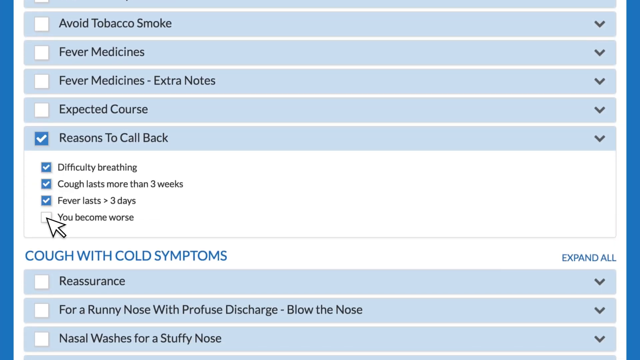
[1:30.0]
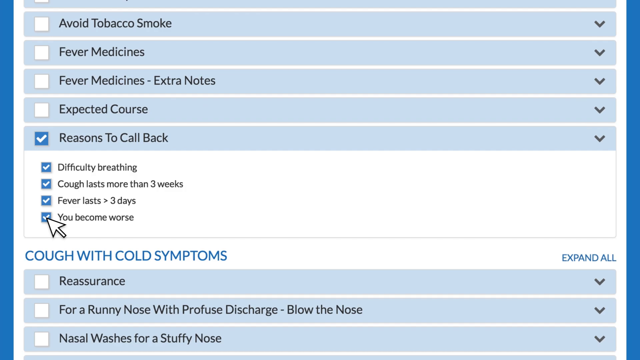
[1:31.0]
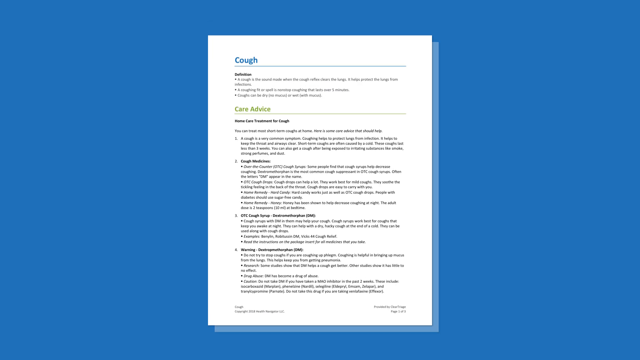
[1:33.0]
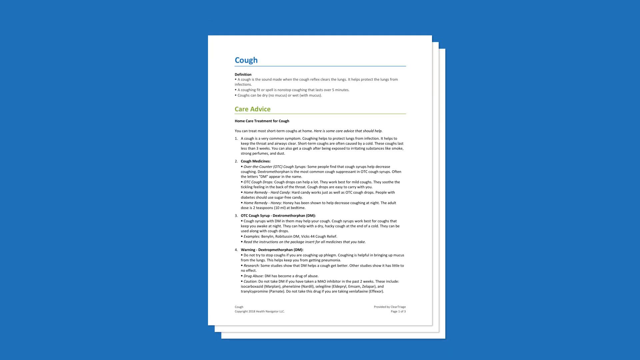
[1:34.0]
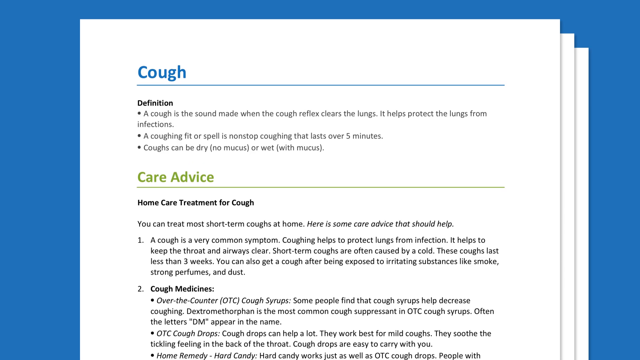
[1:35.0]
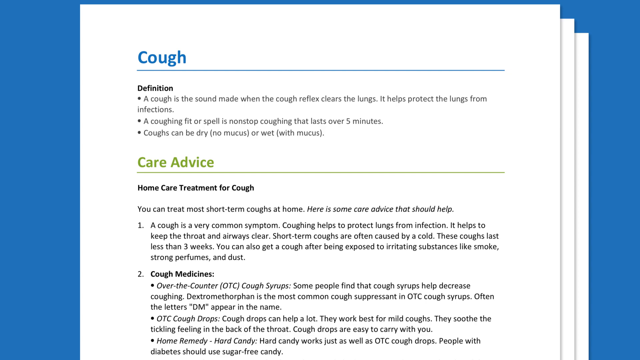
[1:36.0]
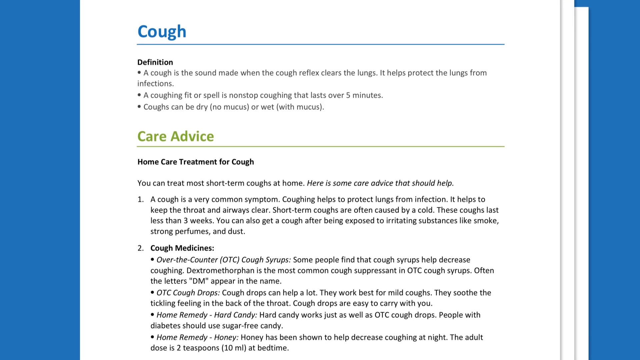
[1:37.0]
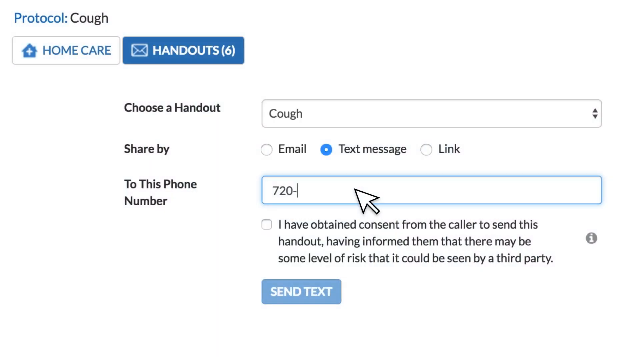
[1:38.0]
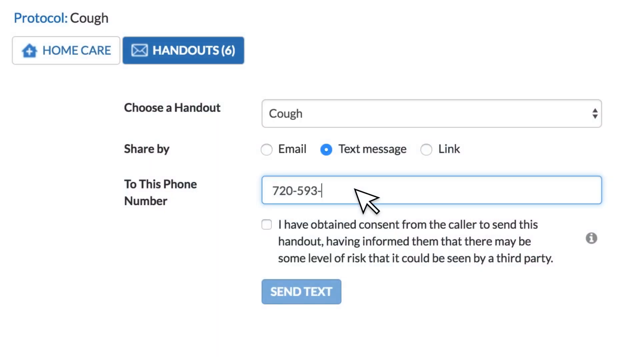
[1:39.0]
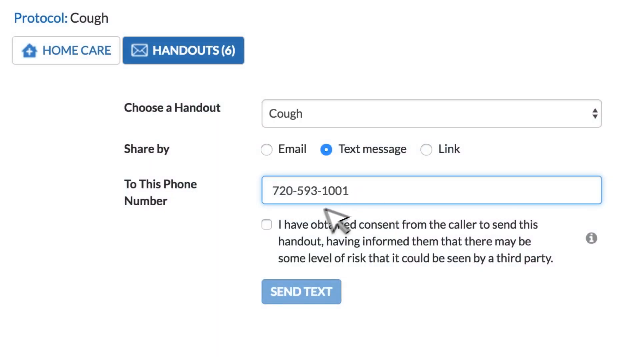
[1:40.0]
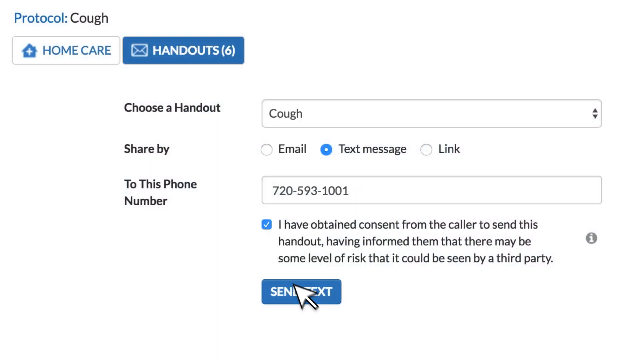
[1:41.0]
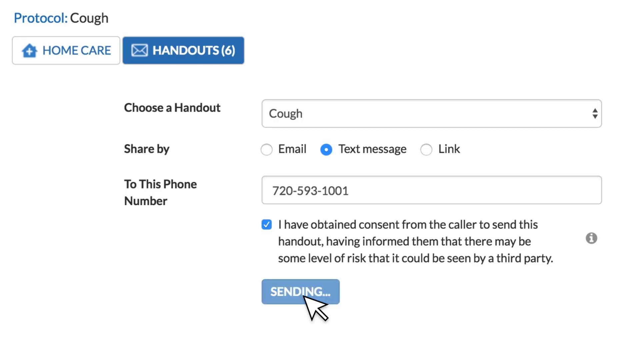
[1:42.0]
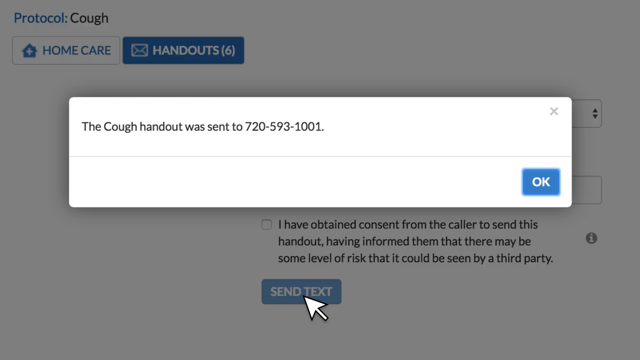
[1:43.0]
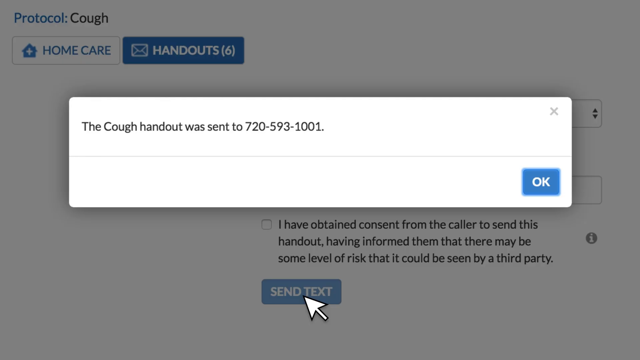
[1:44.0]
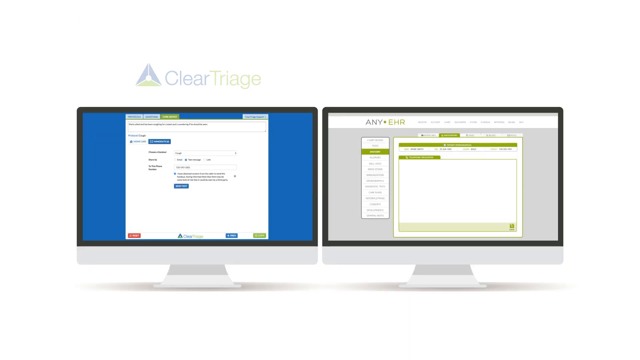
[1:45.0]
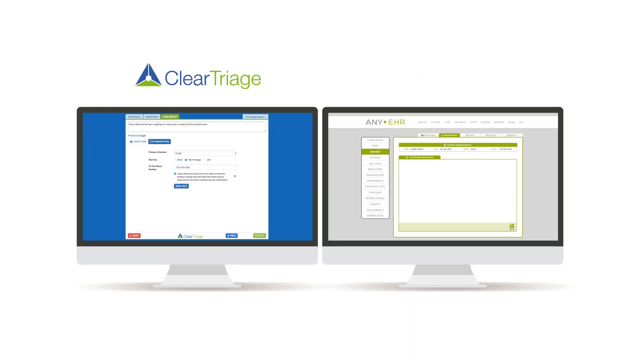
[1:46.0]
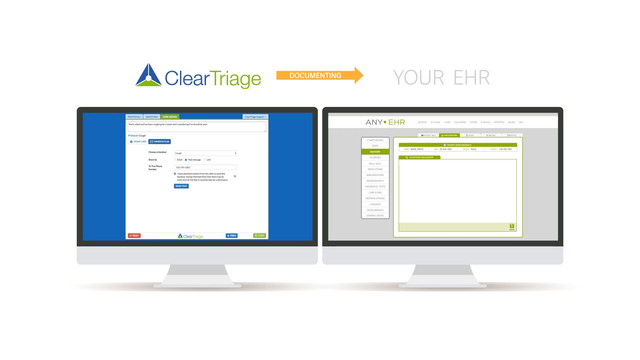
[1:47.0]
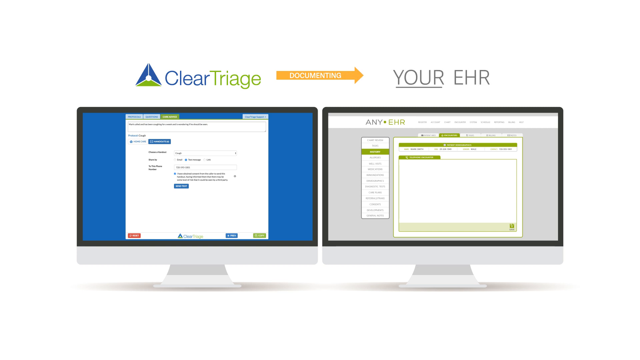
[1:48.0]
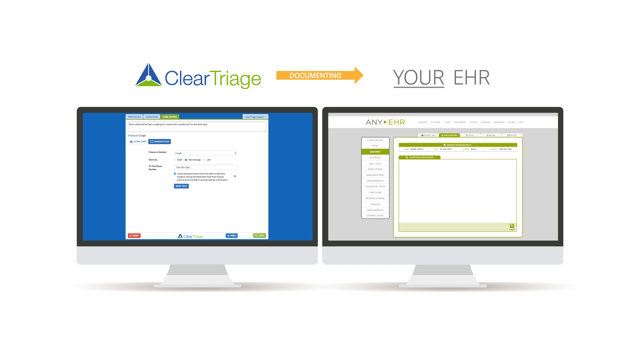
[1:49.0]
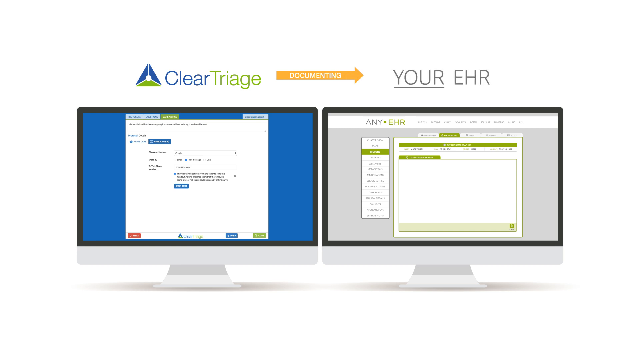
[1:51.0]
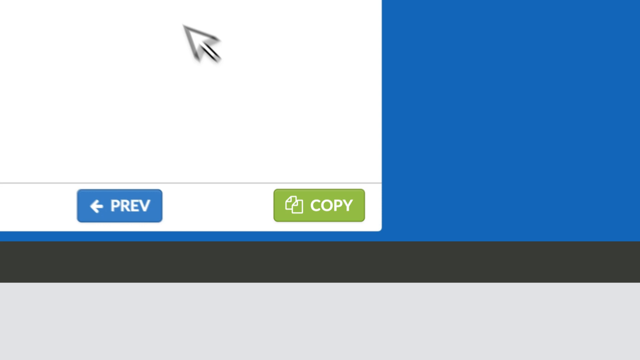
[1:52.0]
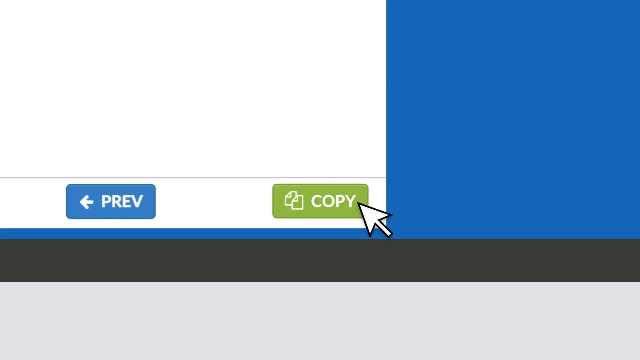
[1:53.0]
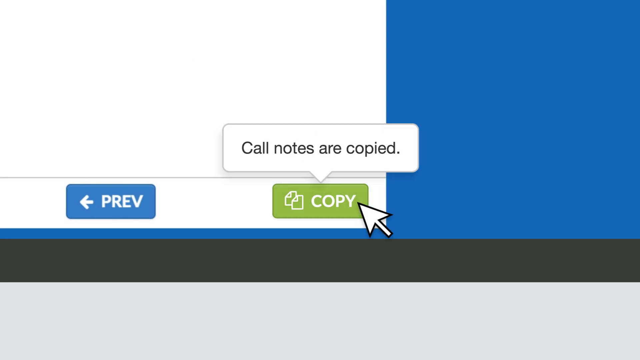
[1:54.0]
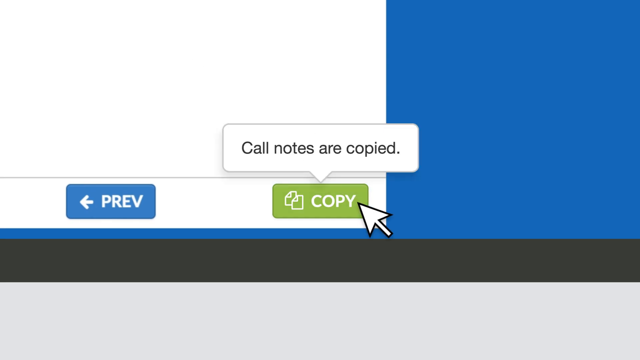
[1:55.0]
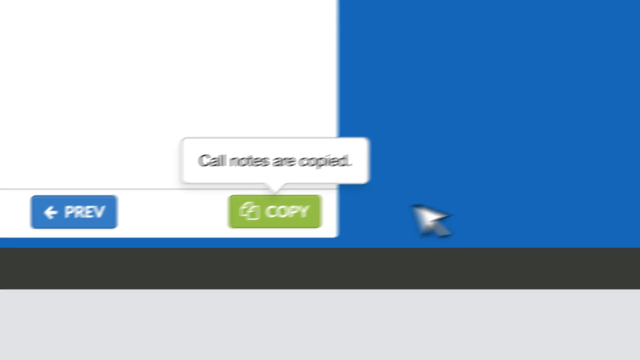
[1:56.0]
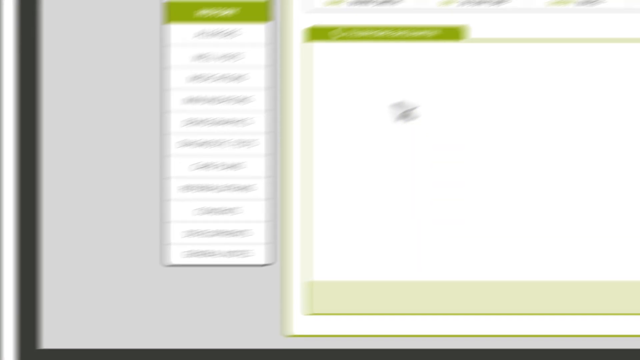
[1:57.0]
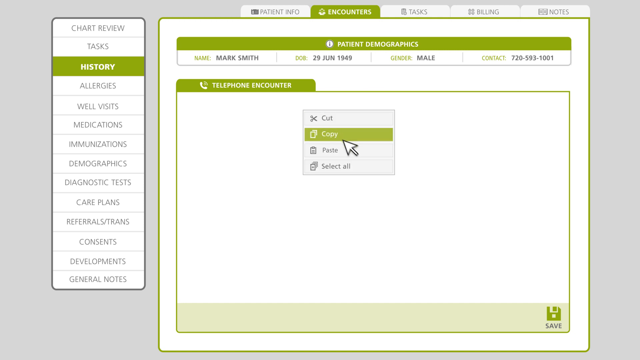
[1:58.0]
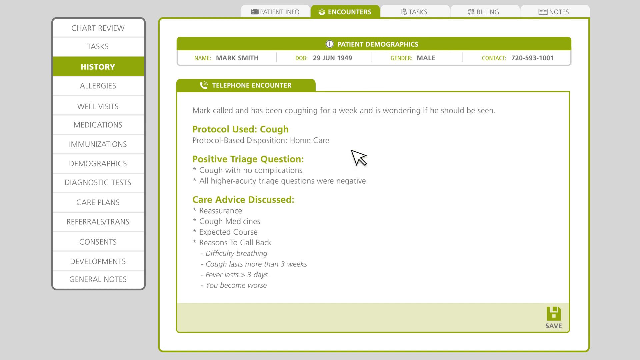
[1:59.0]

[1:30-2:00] On a computer screen with a blue background, a white window is open containing many clickable boxes, four of which are already checked with white checkmarks. From top to bottom the items read "avoid tobacco smoke", "fever medications", "fever medicines - extra notes", "expected course", "reasons to call back" (checked), "difficulty breathing" (checked), "cough lasts for more than three weeks" (checked) and "fever lasts greater than three days" (checked). The mouse cursor arrow is on the box to the left of "you become worse" and checks it. That screen fades away and papers appear, with "cough" at the top followed by some information. Another computer screen with an all-white background appears. It says "choose a handout" with a box reading "cough" next to it. Below, it says "share by" with circles for email, text message and link; text message is selected. Below that it says "to this phone number", with a box to the right containing "720-593-1001" and a white mouse cursor on it. Below that, the arrow clicks and selects a box reading "I have obtained consent from this caller to send this handout having informed that there may be some level of risk that it could be seen by a third party". Below that is a blue "send text" button; the arrow clicks it and it says "sending". Something with writing on it appears, then two computer screens appear, one with a blue background. The arrow clicks the copy button on the blue screen, then goes to the other screen and clicks another tab.